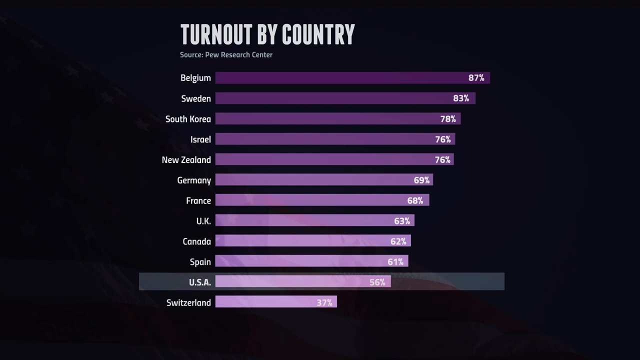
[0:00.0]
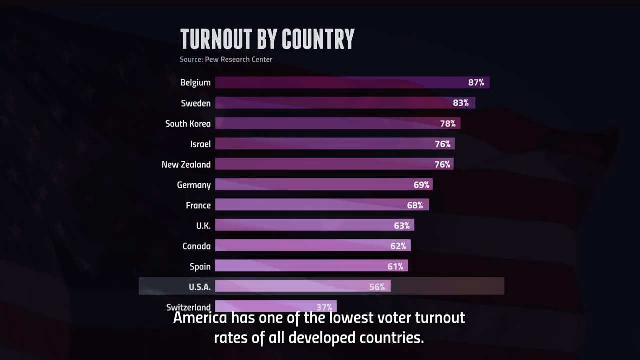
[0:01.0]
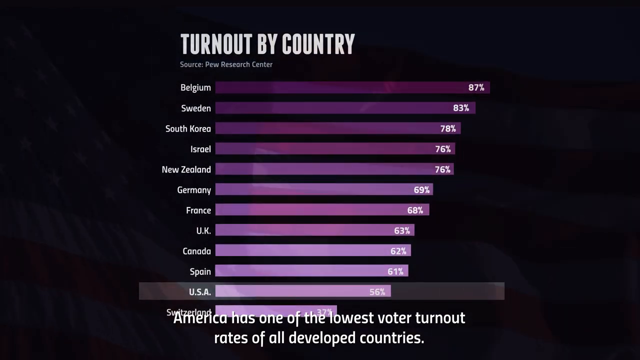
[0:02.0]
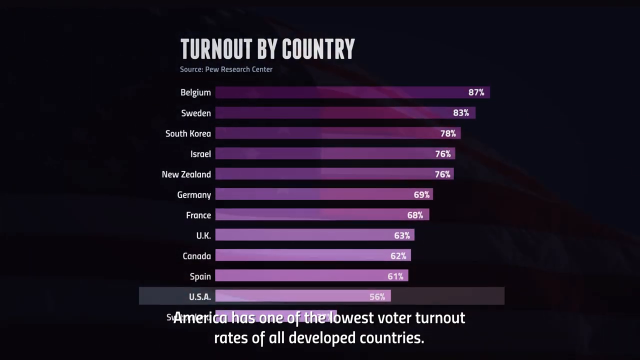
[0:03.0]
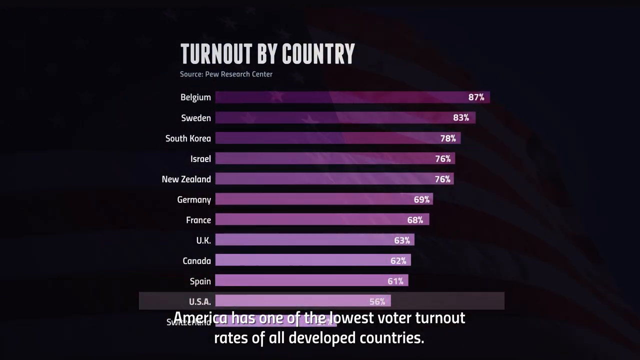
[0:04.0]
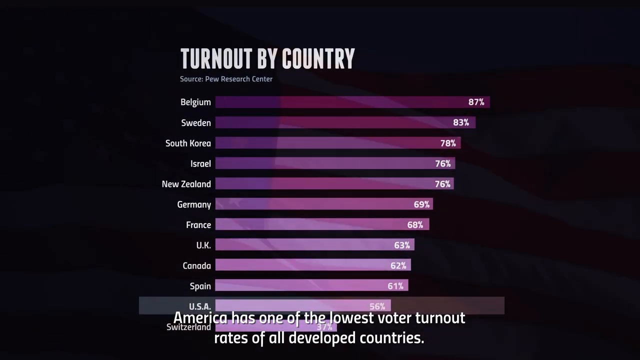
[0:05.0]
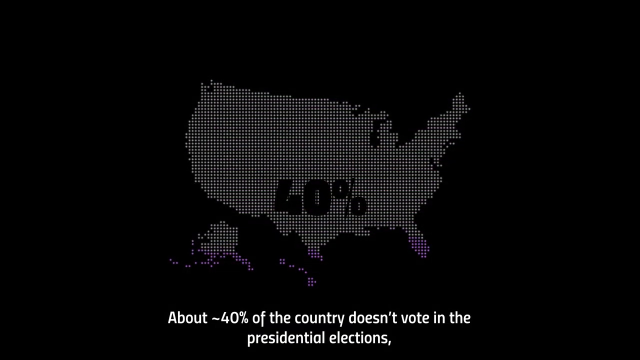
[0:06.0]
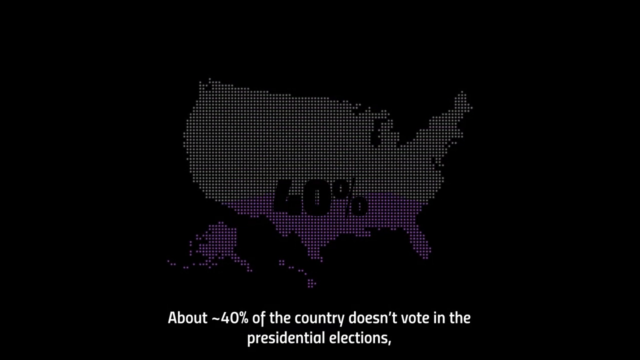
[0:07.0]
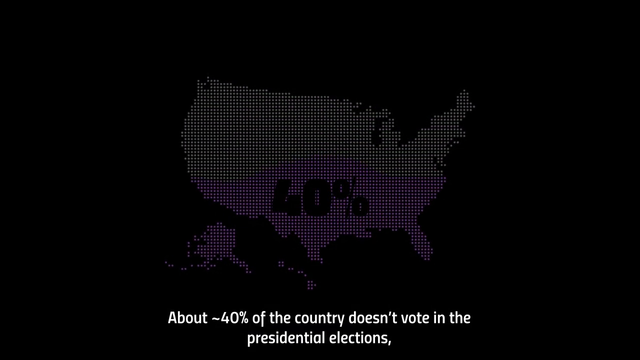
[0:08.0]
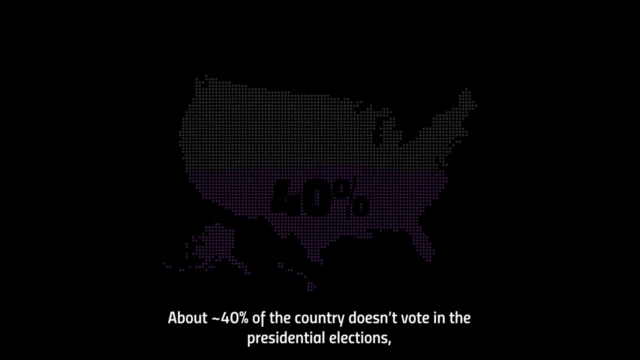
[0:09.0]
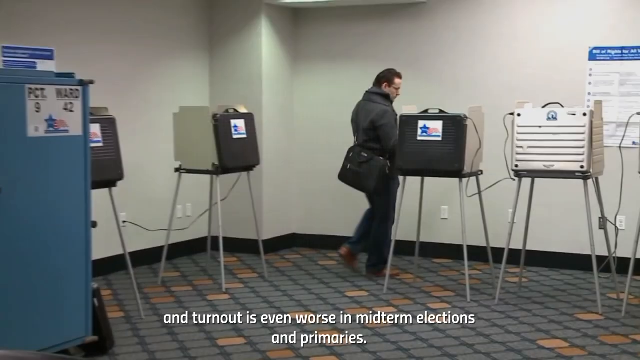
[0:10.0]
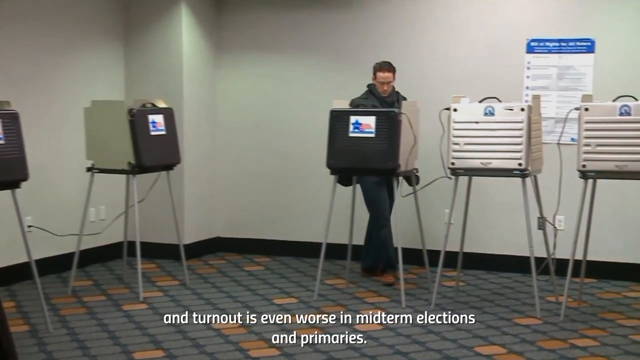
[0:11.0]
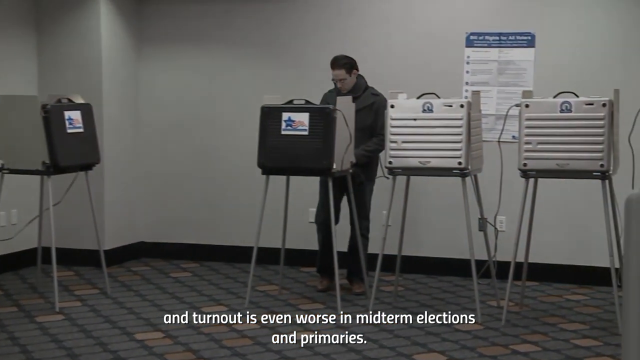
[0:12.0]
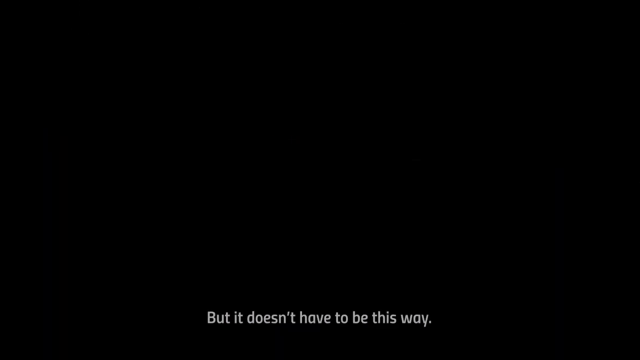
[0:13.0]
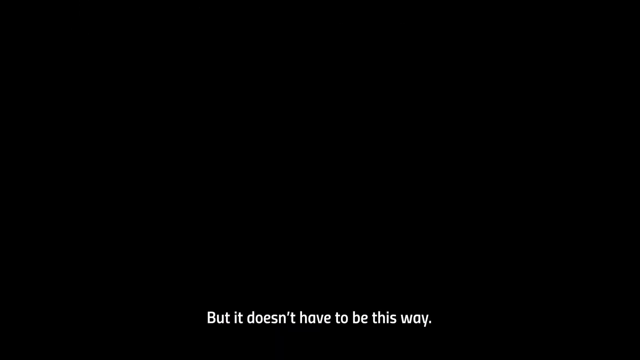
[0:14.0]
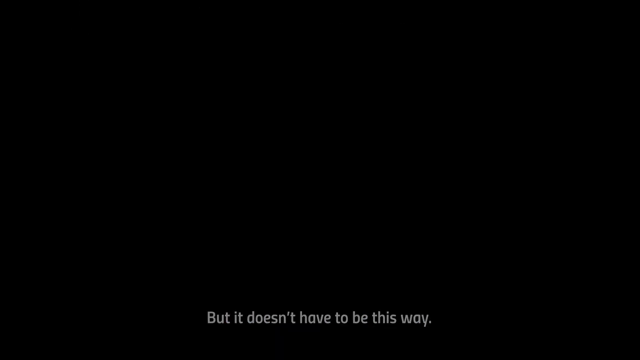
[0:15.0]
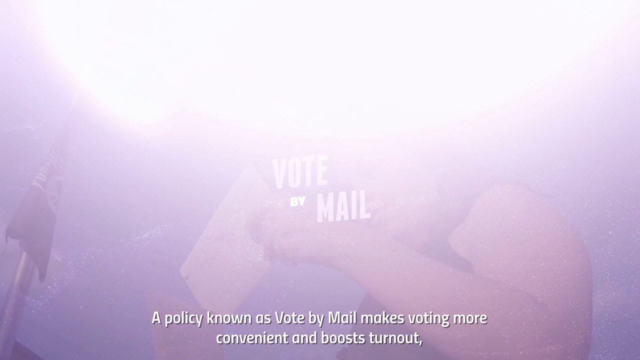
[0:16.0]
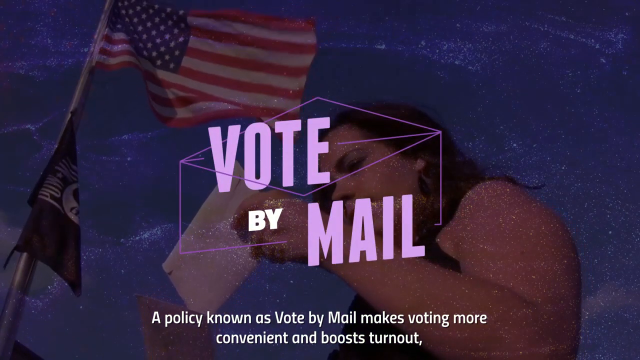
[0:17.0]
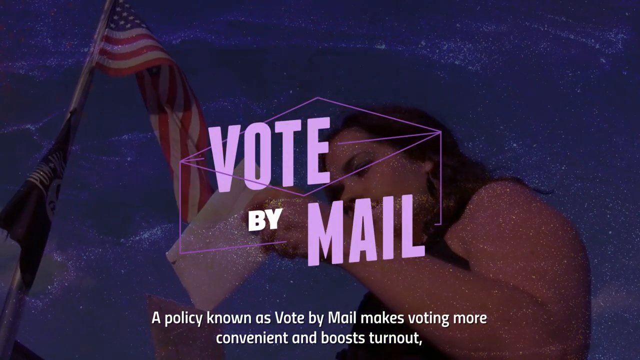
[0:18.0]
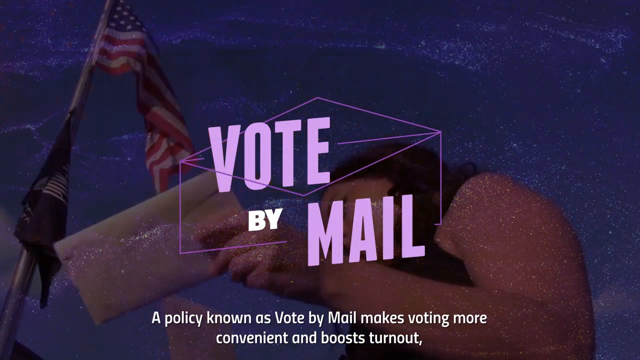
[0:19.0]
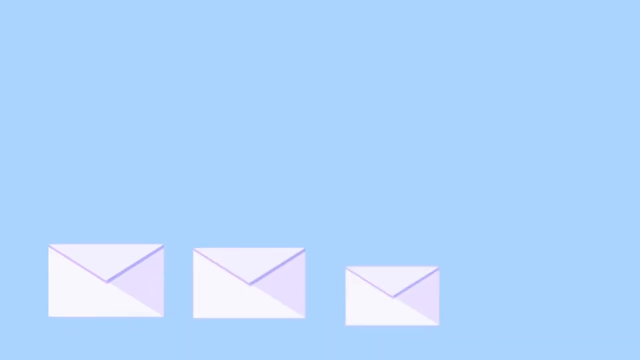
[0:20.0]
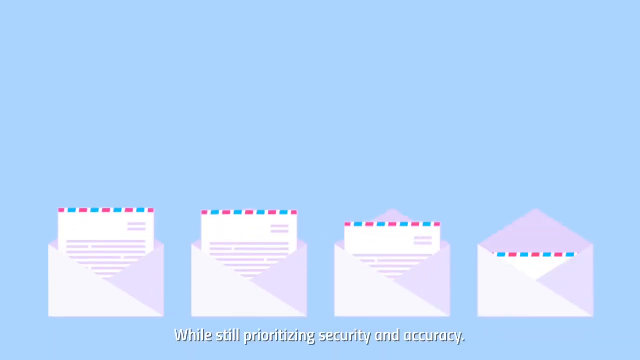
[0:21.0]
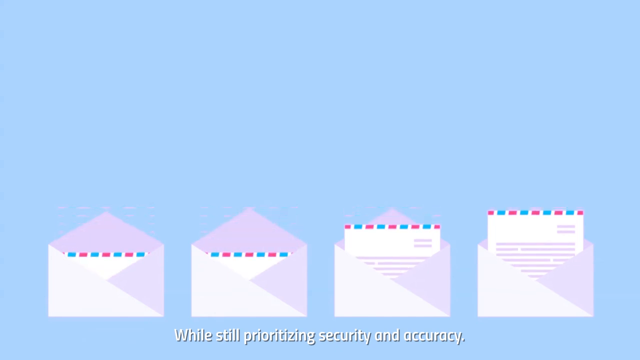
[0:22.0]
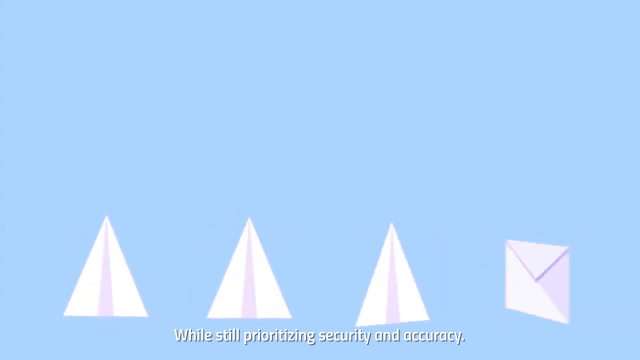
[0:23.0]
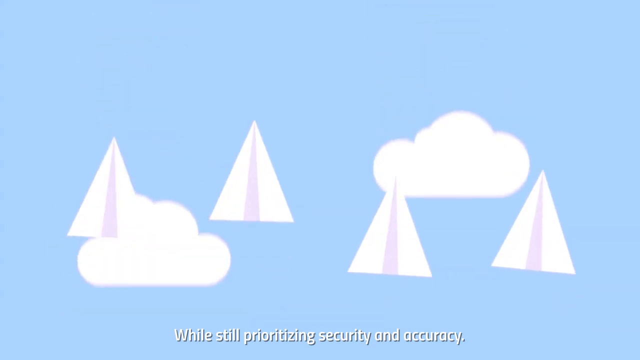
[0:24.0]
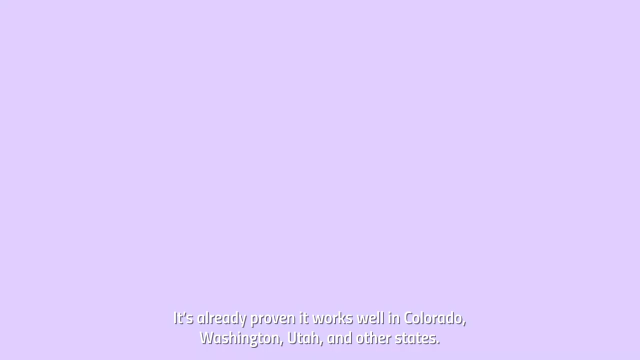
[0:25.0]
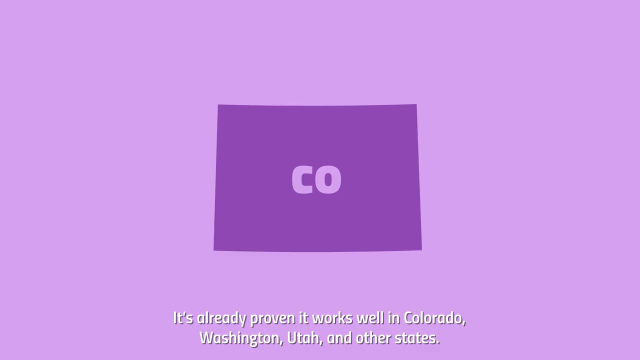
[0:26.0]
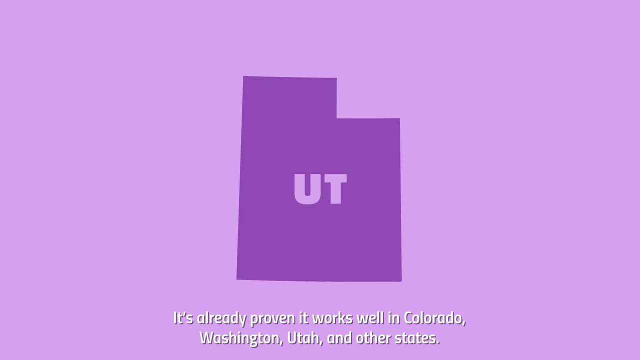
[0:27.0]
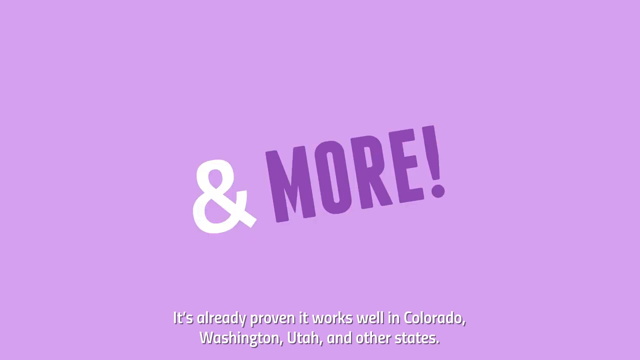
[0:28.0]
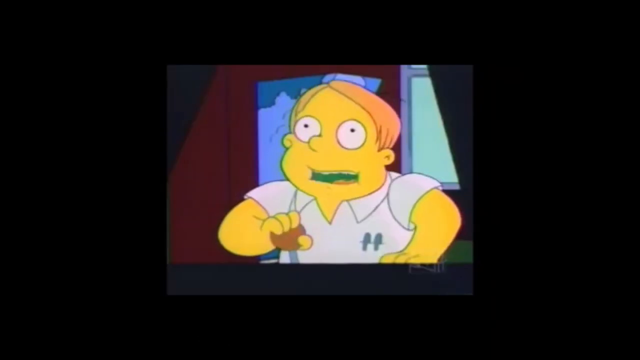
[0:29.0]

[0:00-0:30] A bar chart titled "Turnout by Campus" is shown, with data from the Pruitt Research Center. The chart lists 12 entries, with names on the left side and percentages on the right, including Iran at 74 percent, South Korea at 78 percent, Israel at 76 percent, Brazil at 76 percent, Germany at 69 percent, France at 68 percent, UK at 68 percent, Canada at 57 percent, Spain at 52 percent, USA at 47 percent and Netherlands at 37 percent. The country names are in white text. A man walks to a podium to cast his vote. White envelopes are displayed and are seen moving upward. Toward the end, a cartoon is shown.